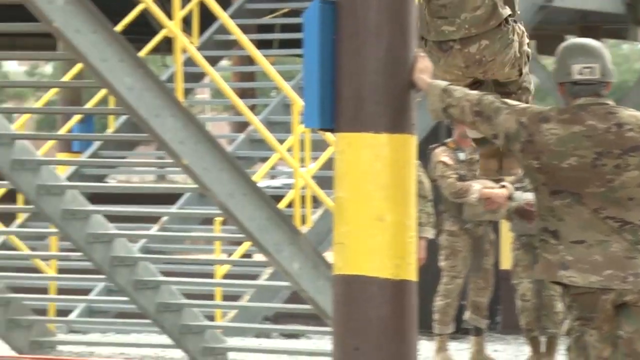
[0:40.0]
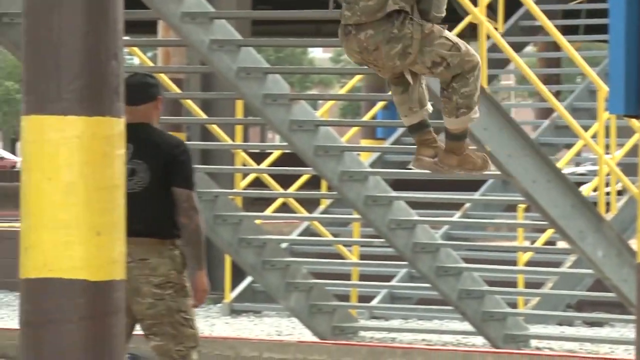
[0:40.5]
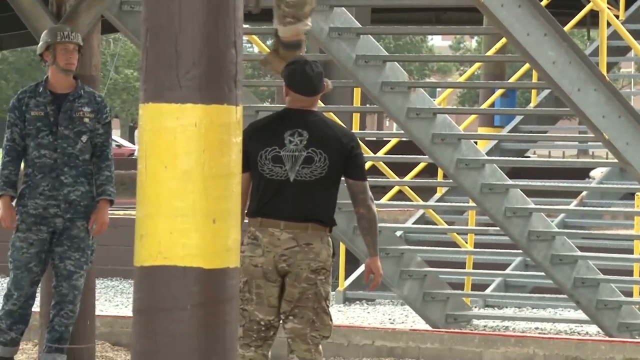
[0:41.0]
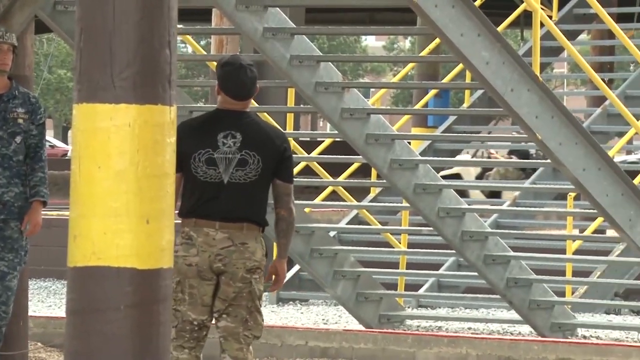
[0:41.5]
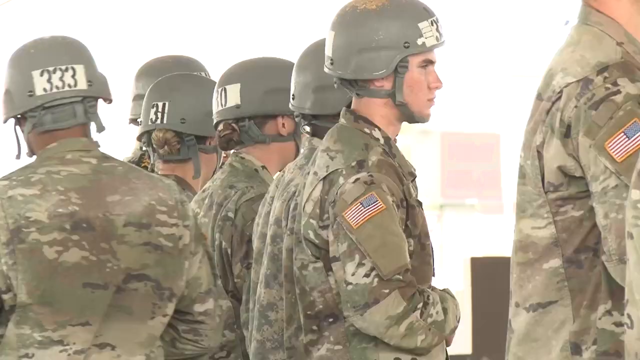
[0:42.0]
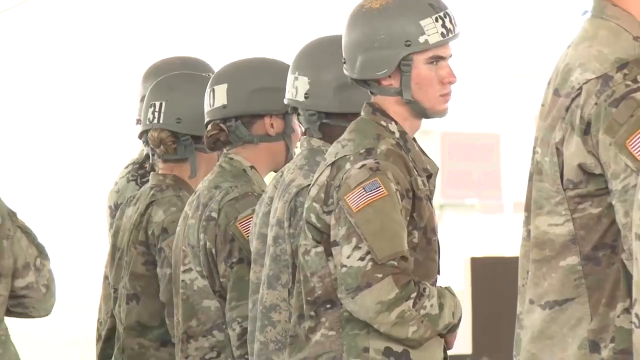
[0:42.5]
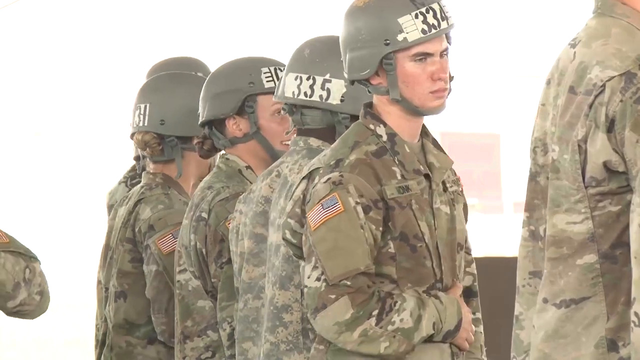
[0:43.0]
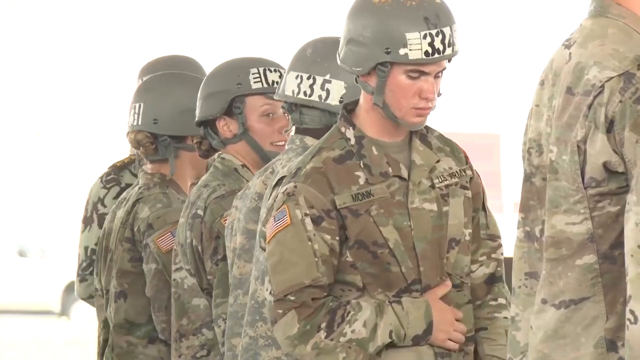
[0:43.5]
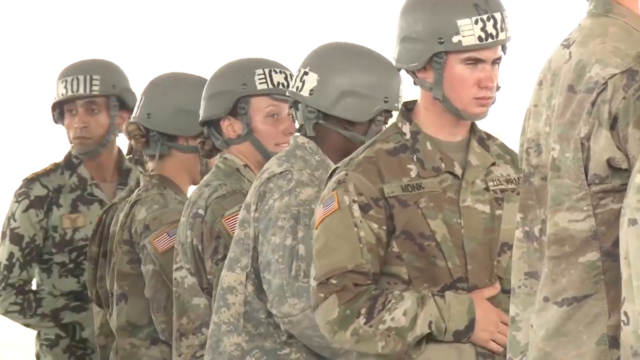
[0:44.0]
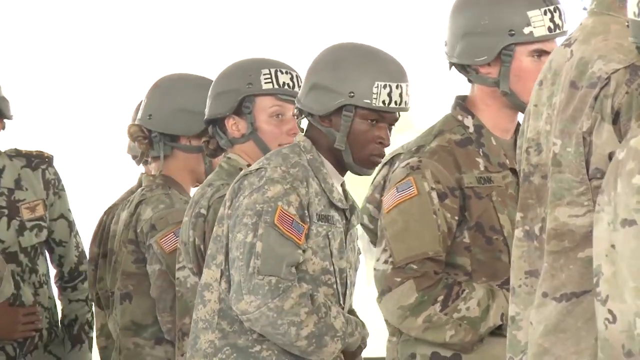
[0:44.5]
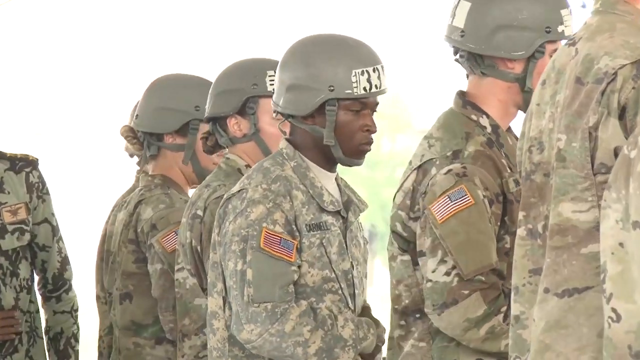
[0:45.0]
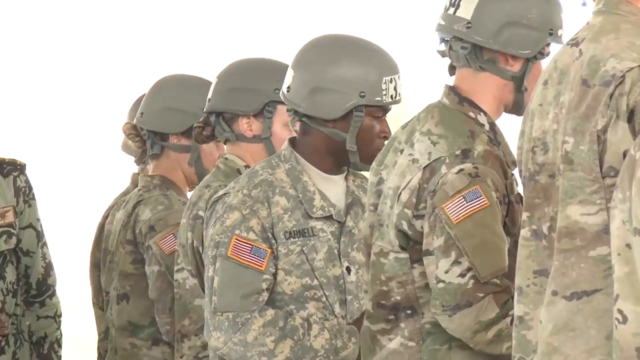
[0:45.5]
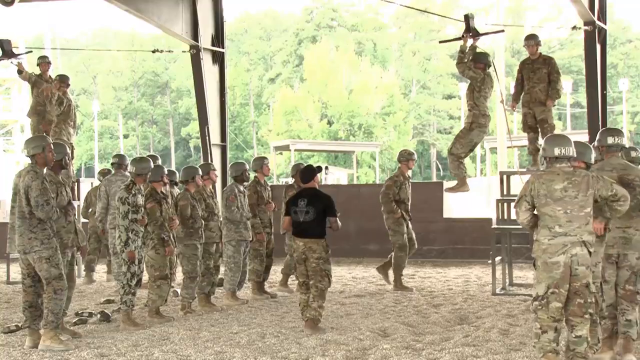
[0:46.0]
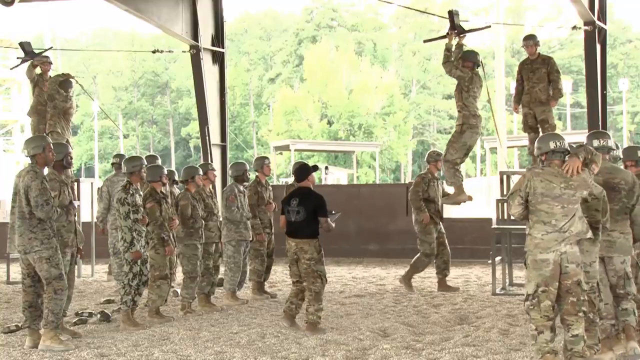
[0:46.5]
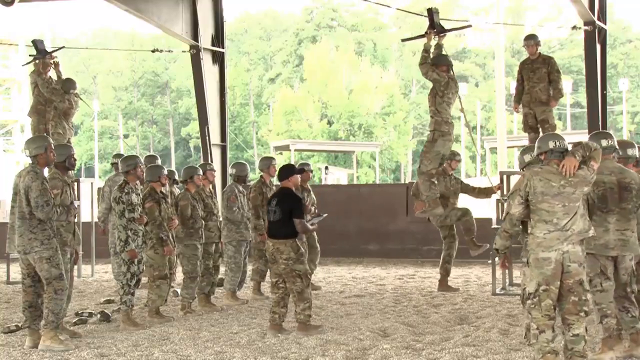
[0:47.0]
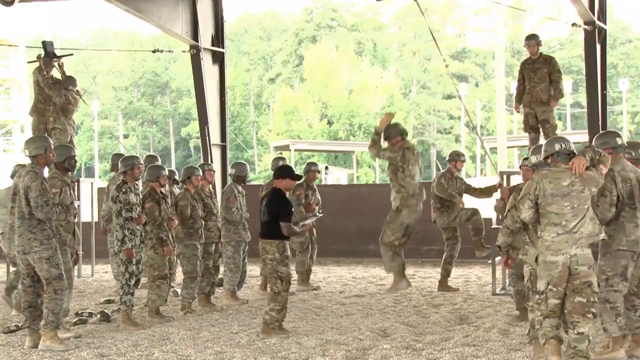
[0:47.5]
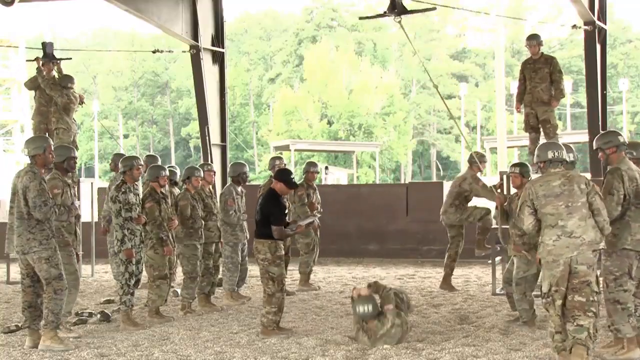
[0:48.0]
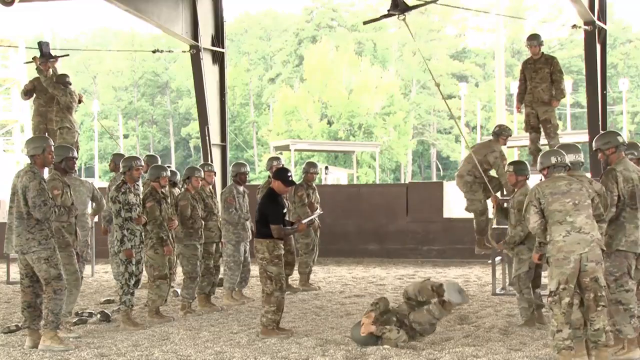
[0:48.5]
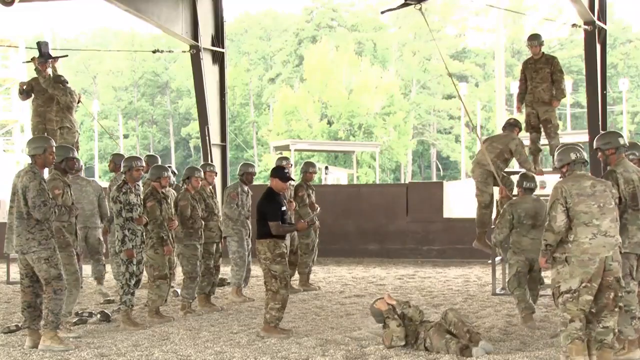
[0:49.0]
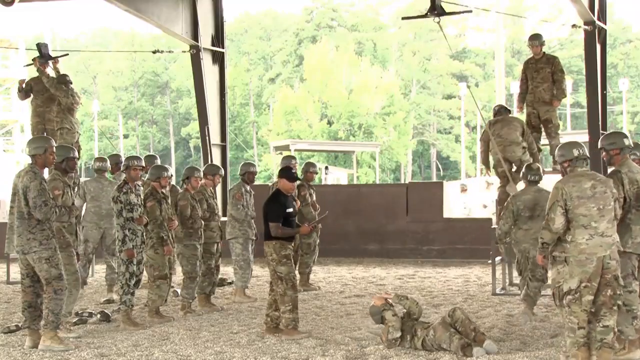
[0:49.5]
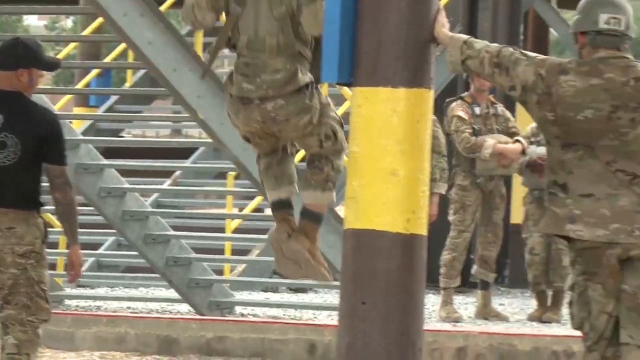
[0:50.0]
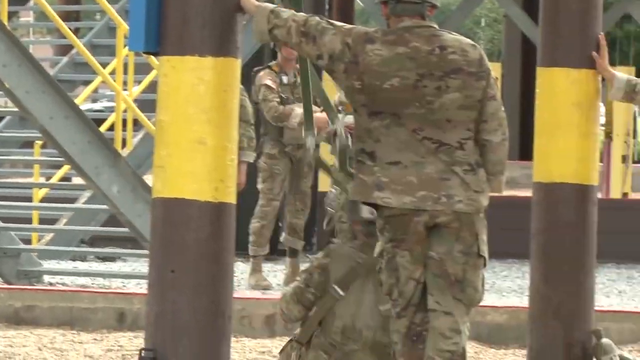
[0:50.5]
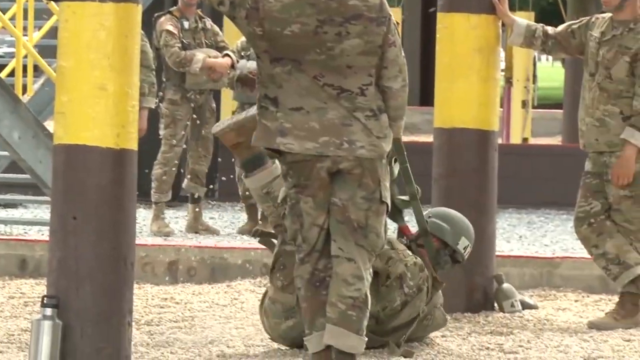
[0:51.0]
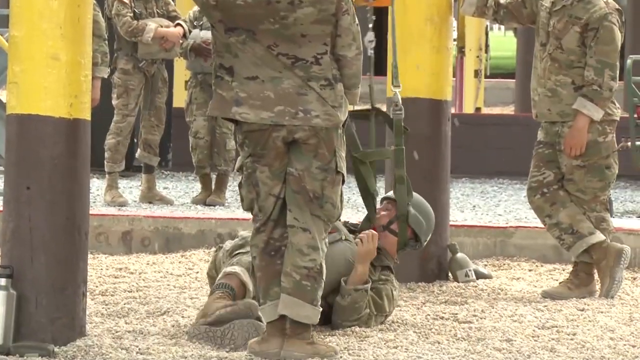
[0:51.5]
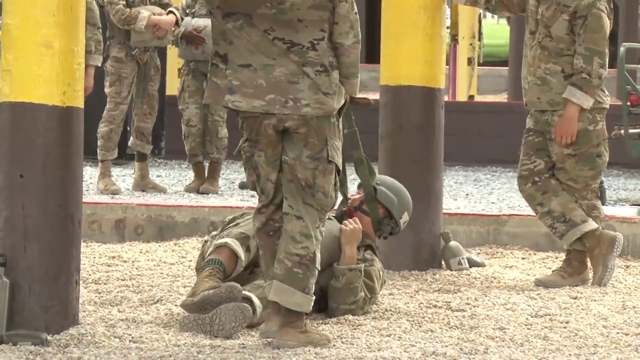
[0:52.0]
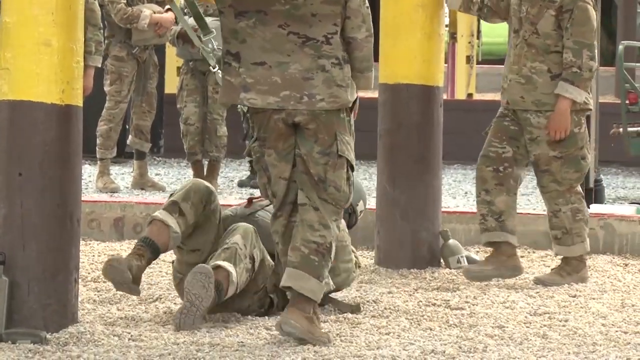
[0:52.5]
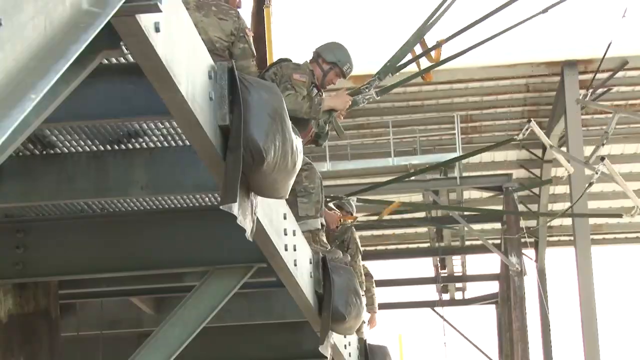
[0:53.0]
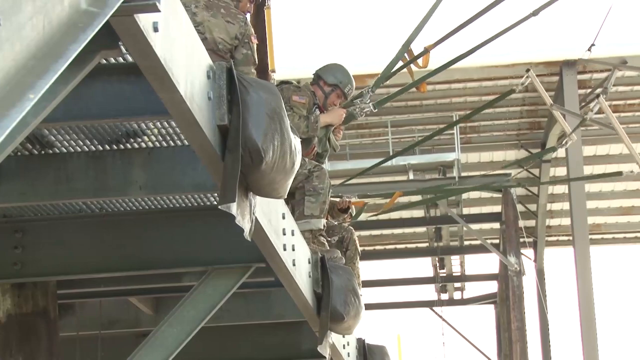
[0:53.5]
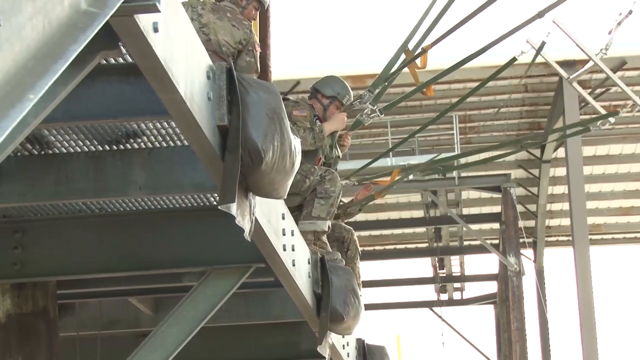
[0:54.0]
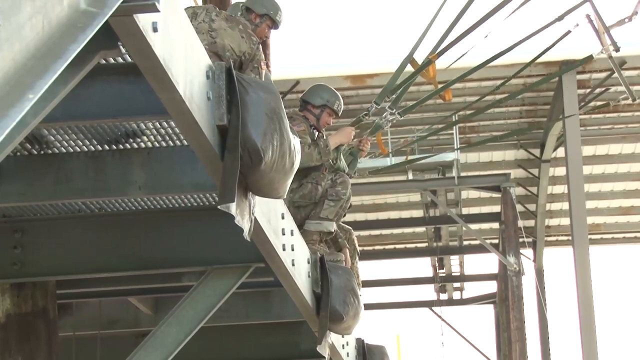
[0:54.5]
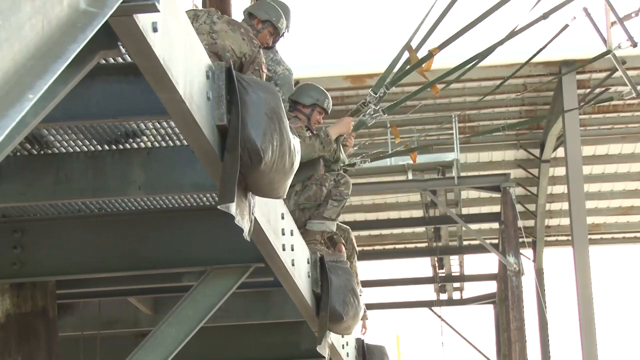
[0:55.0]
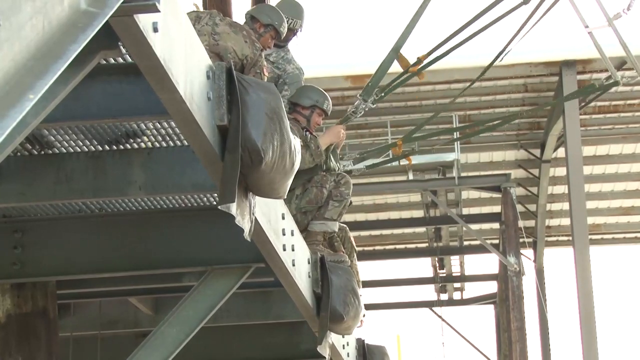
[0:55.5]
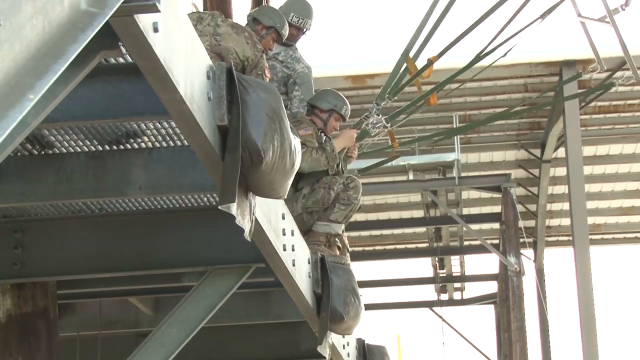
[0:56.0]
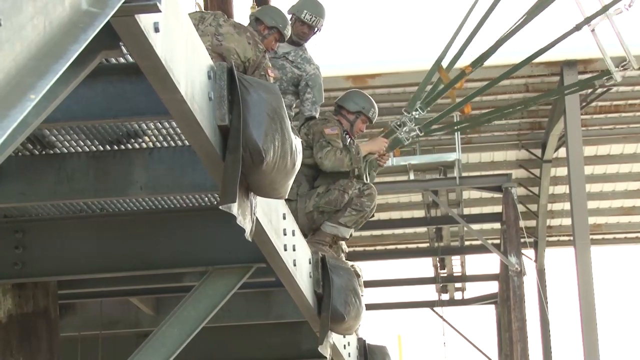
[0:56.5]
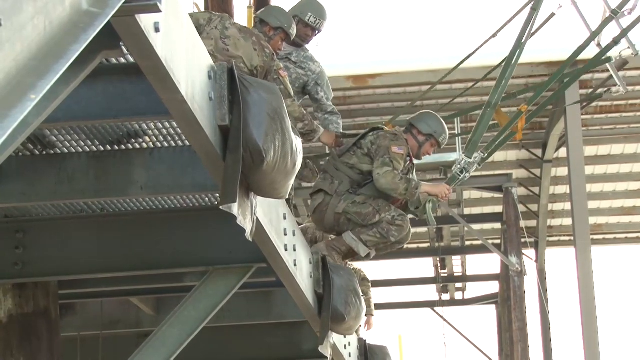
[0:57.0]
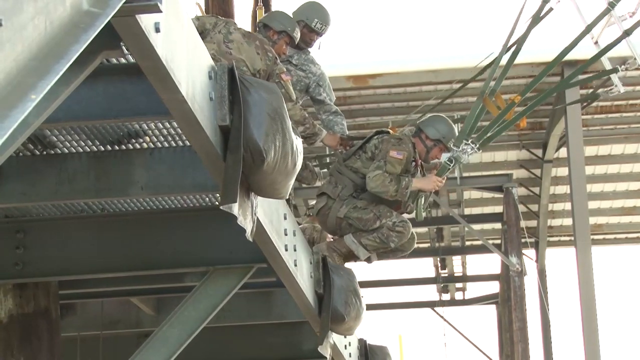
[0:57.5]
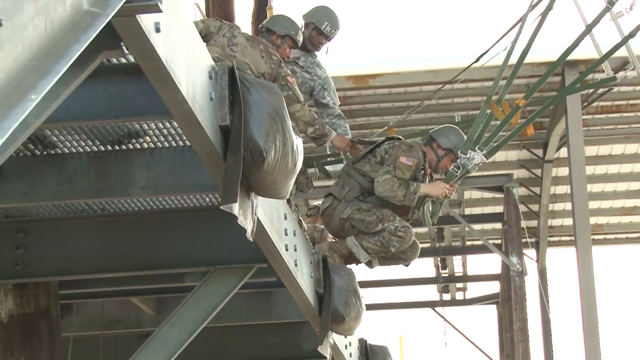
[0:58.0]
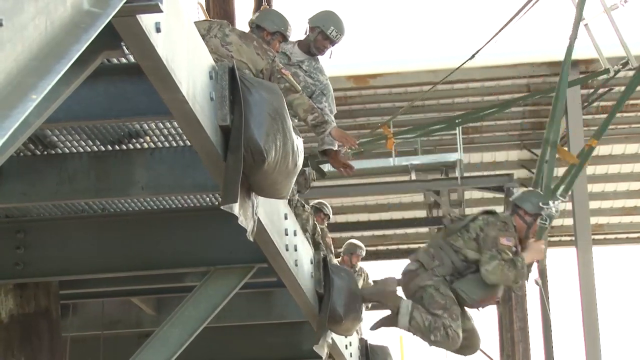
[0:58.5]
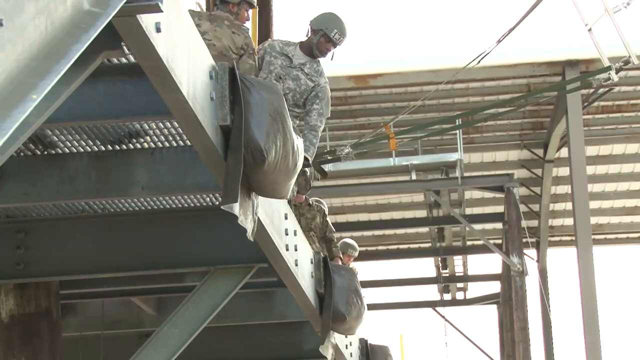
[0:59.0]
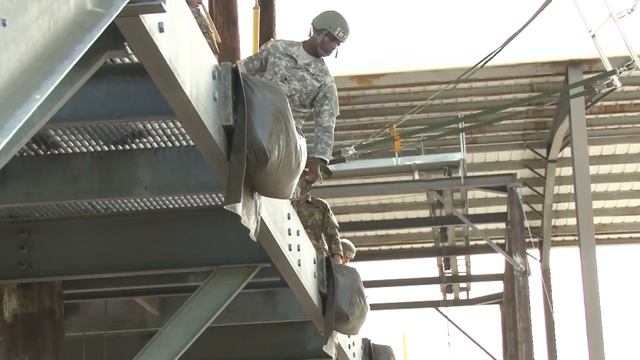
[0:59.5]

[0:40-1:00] A type of stairwell with yellow rails appears. A soldier leans his left arm against a brown and yellow striped pole. He wears camouflaged fatigues, top and bottom, and a hard or protective military-style helmet. A few other soldiers are in the screen, their faces not visible, also in camo fatigues top and bottom. The camera pans slightly to the left, showing another brown and yellow pole. To the right of the pole, in the center of the frame, is a man in a black short-sleeved shirt and a black cap with tan and brown camouflage pants and a tan belt. On the other side of the pole, on the left, is another soldier in camouflage fatigues that look like a forest type of camouflage, in many different shades of green. He wears a hard helmet and a black shirt under his camo top.